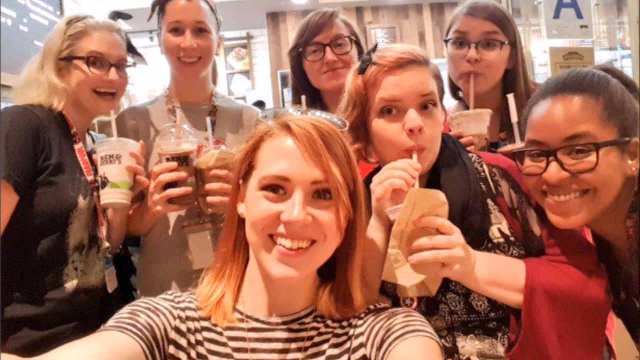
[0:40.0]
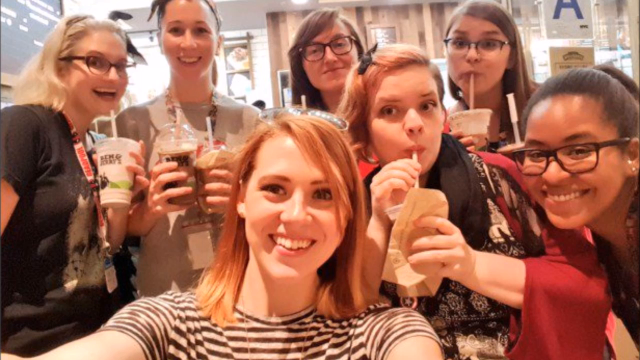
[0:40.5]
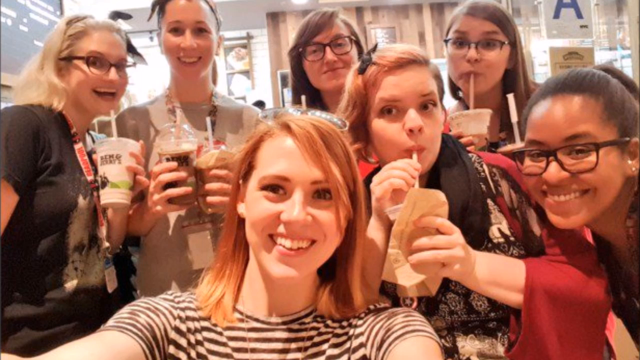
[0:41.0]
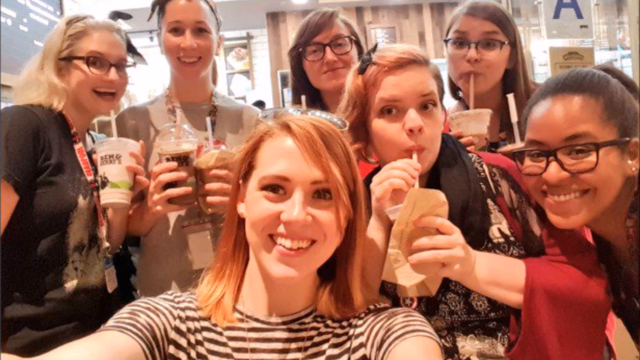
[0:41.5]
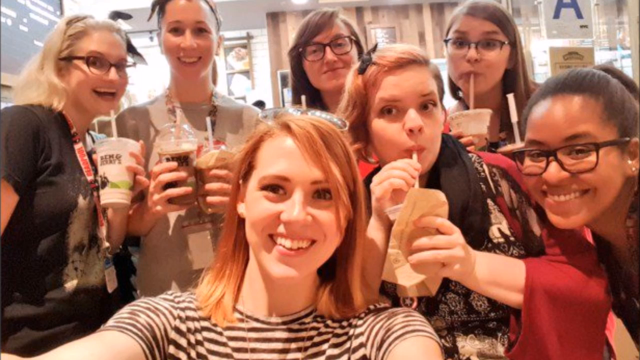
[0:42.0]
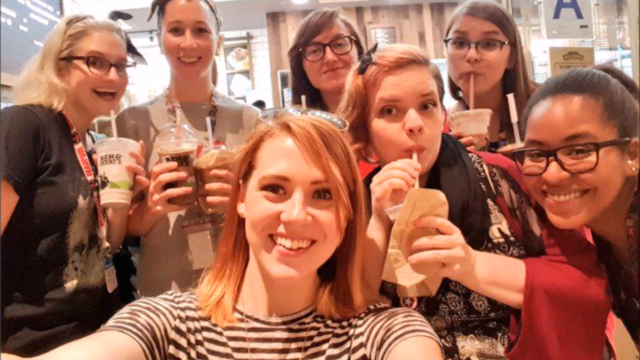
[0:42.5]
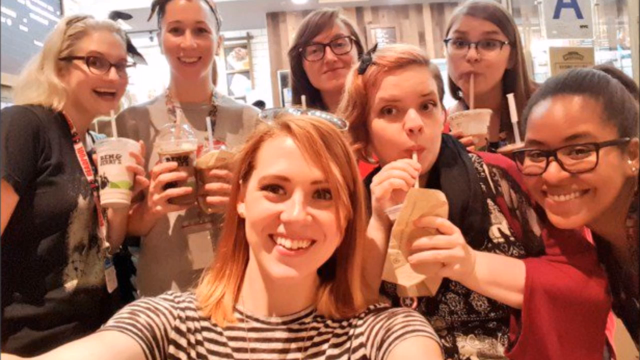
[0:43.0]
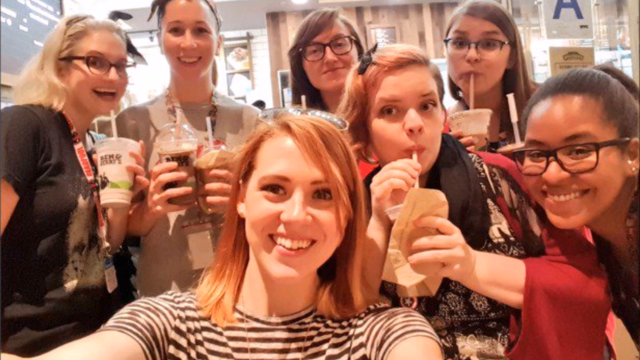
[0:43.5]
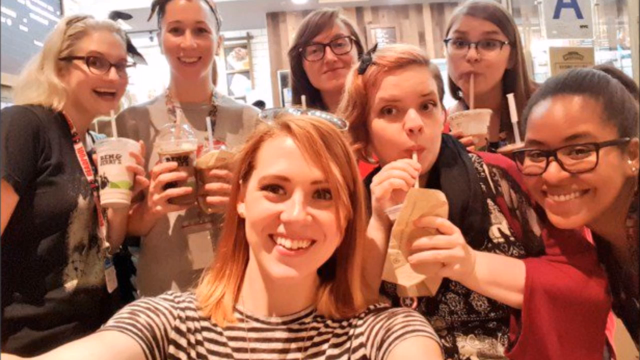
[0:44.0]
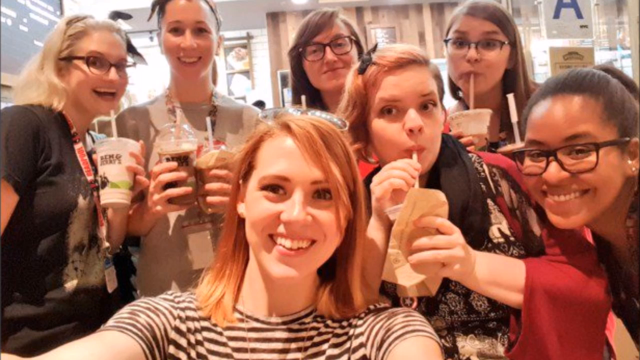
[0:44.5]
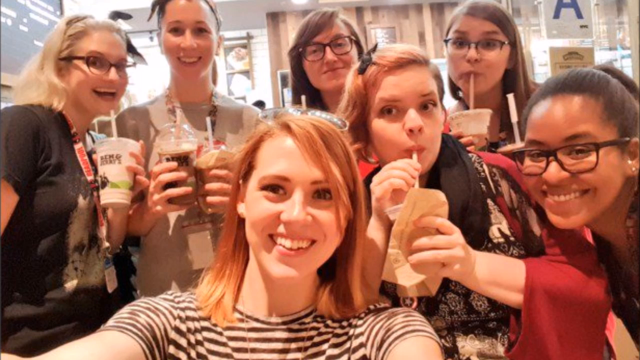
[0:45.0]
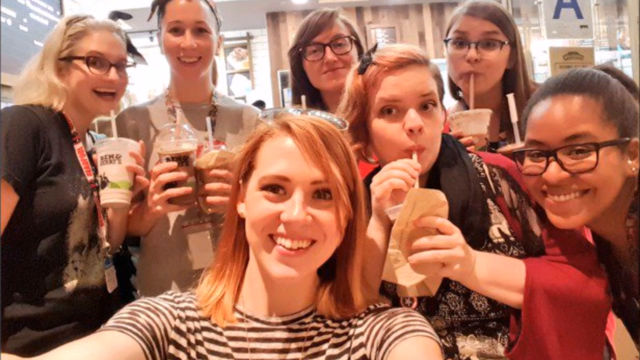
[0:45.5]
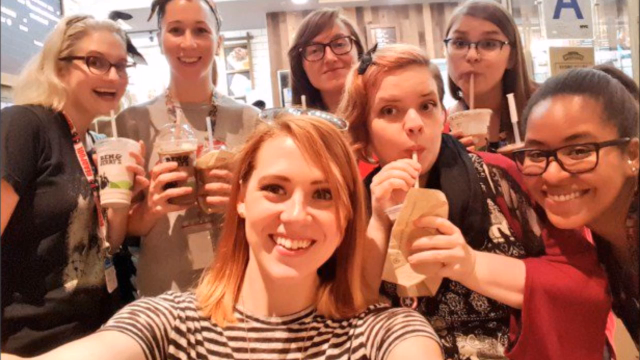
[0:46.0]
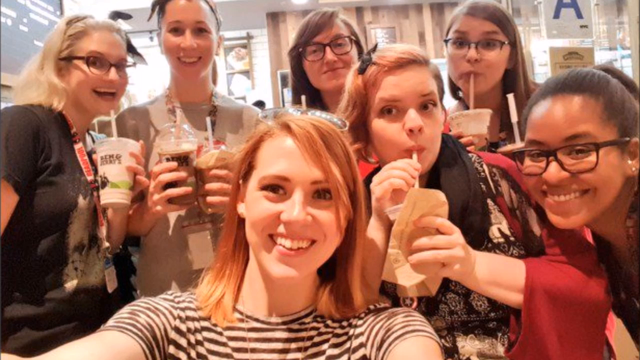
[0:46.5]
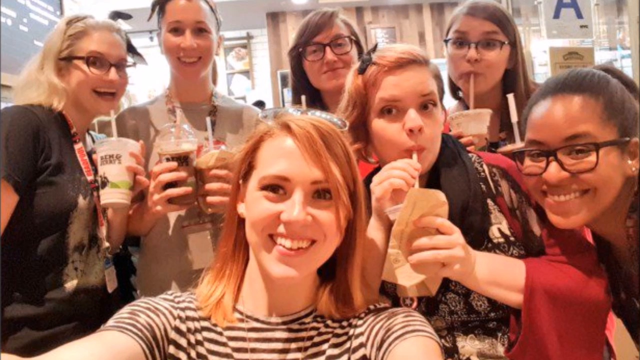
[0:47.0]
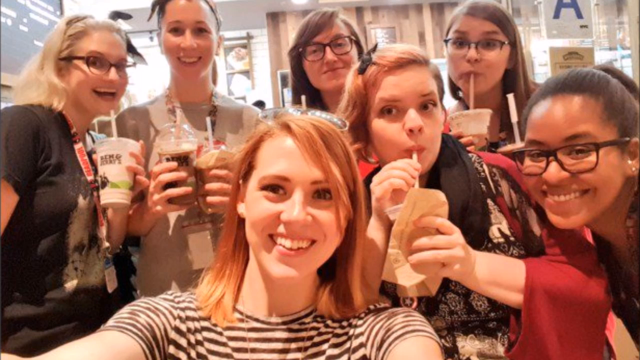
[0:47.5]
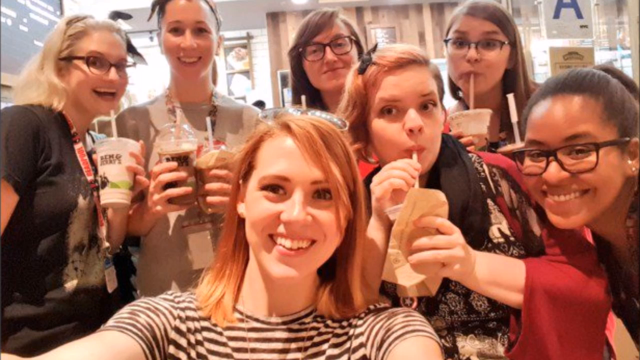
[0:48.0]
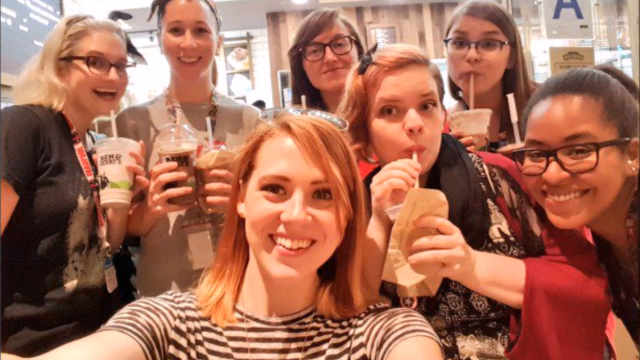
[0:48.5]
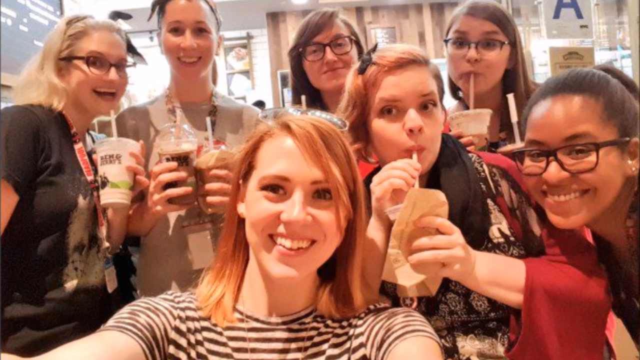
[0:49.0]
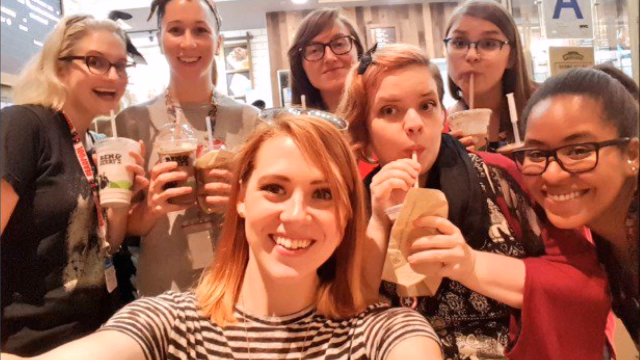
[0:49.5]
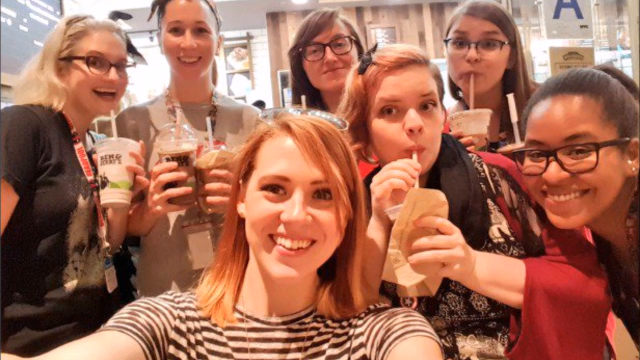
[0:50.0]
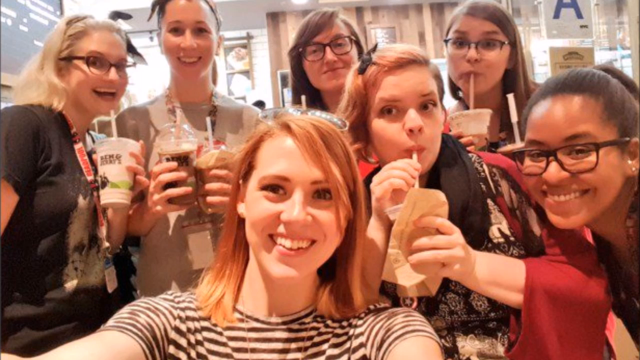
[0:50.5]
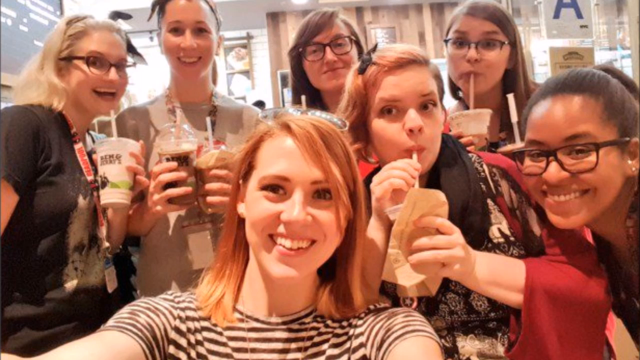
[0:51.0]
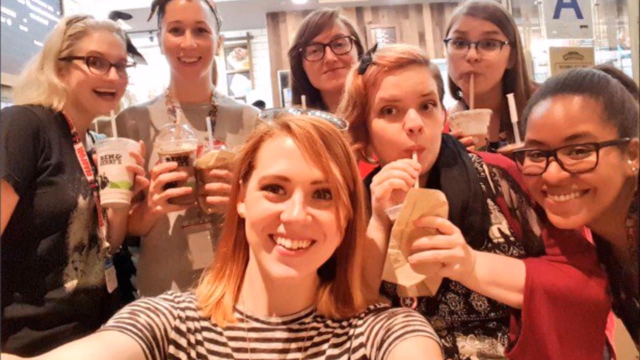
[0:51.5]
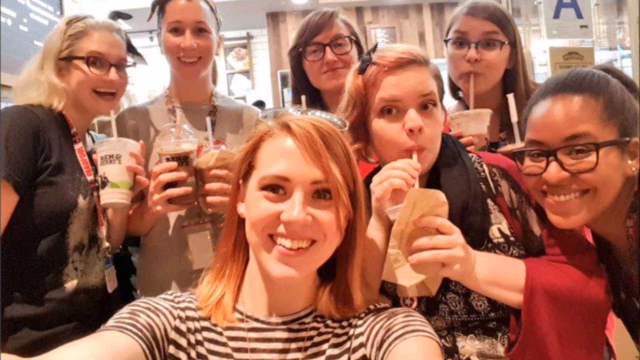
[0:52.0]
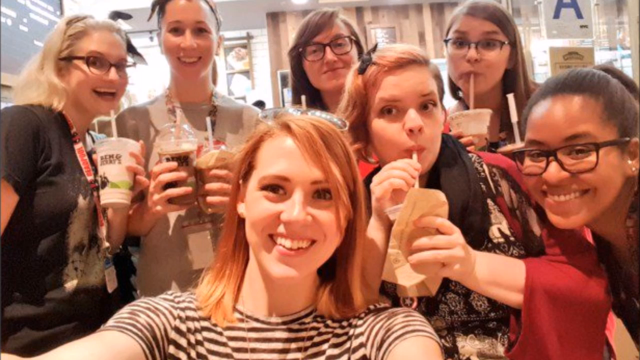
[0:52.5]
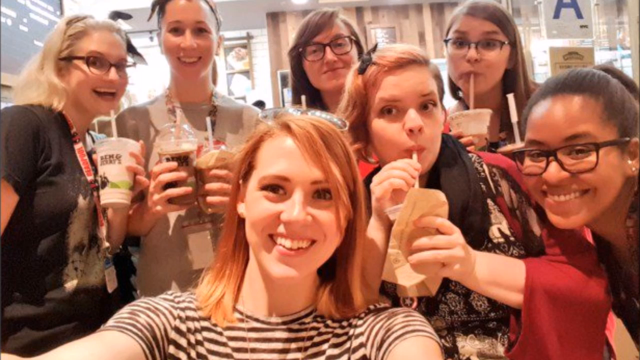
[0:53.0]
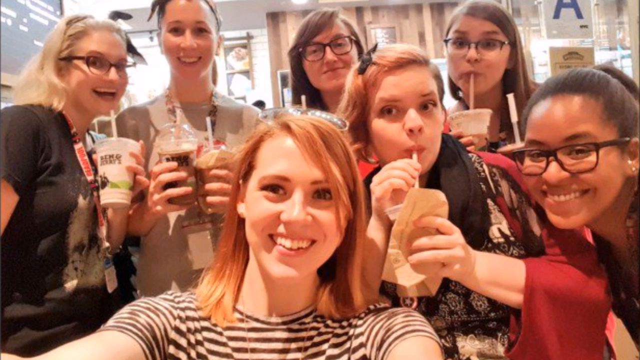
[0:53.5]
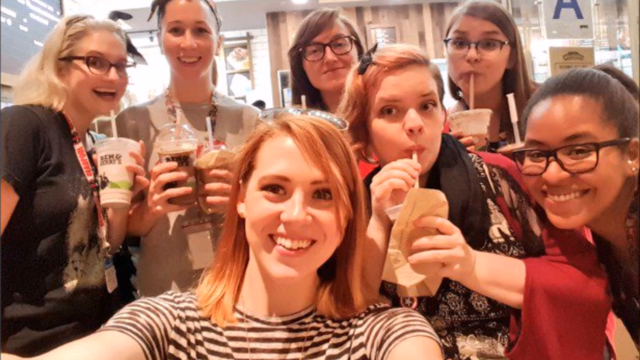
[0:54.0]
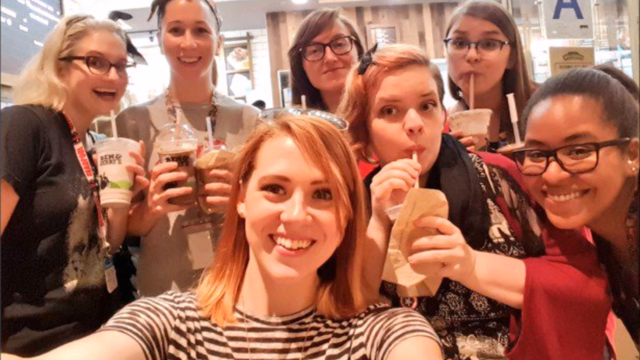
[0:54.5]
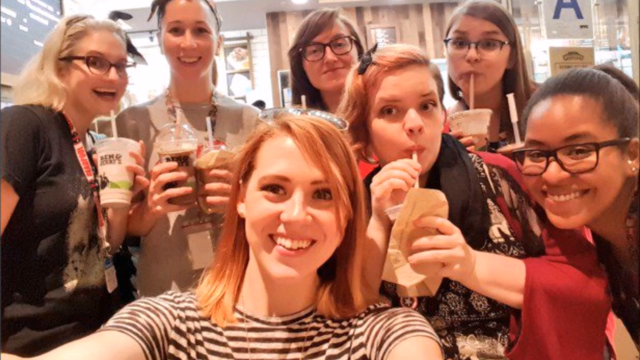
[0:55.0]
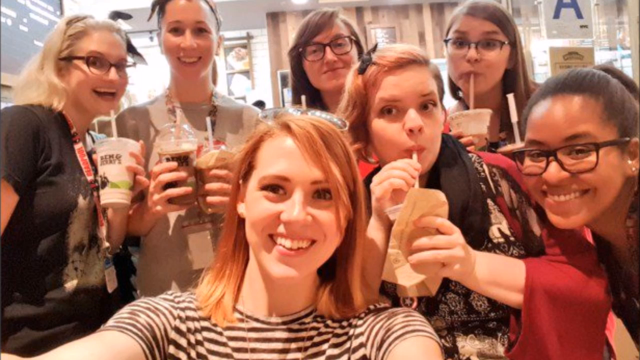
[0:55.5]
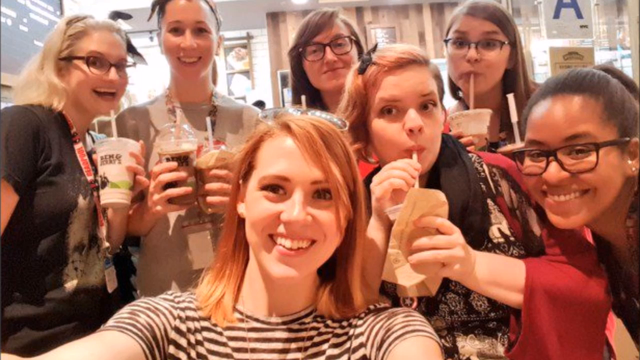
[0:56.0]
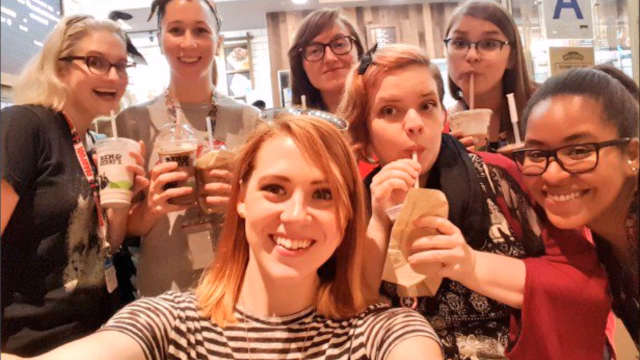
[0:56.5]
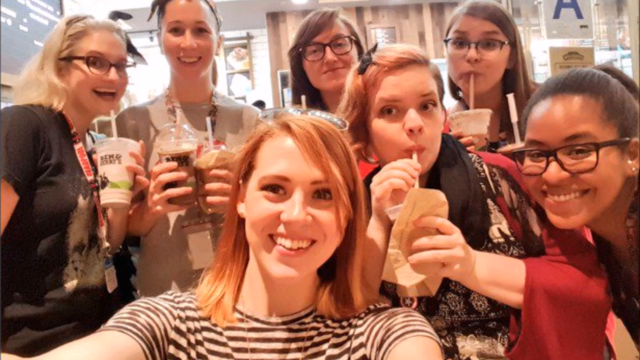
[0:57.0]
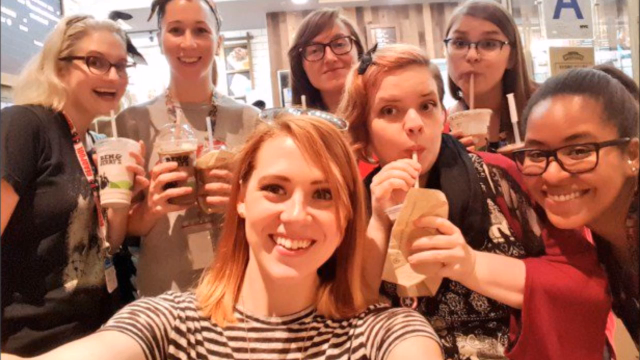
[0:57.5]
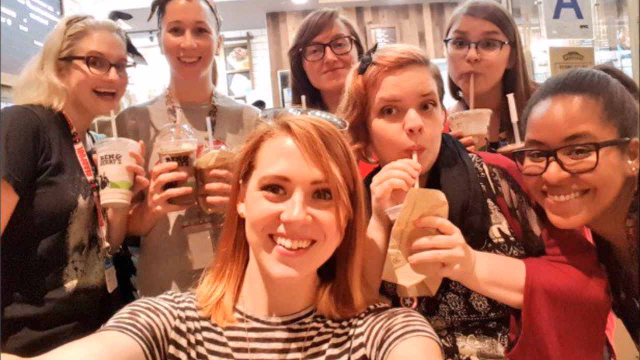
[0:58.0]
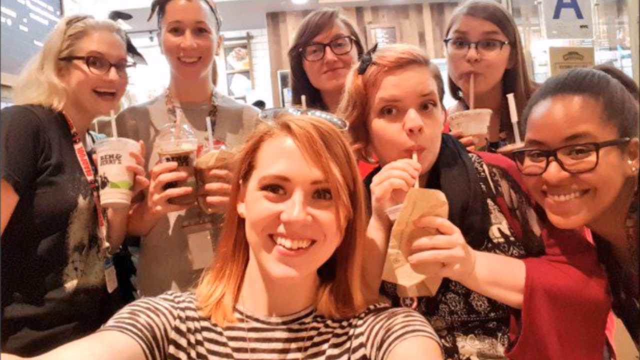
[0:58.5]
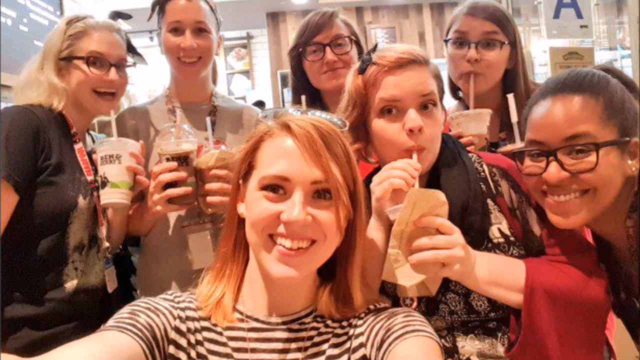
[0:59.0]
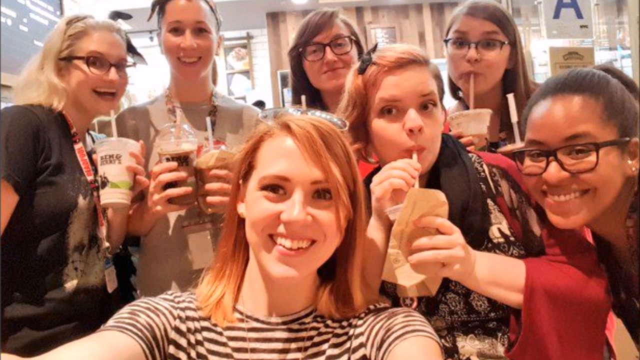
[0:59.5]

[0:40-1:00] The woman in front is the one who took the photo of the group. Behind them are windows with some posts written on them, and on the far right there seems to be a menu. Behind the woman in the brown t-shirt holding two cups of milkshake and behind the woman in the black t-shirt there seems to be a TV screen. The walls are beige and light brown, and the ceiling is wide. The women seem happy. Next comes a scene of four animated people, two girls and two boys, seated in a restaurant with pink walls and a blue couch.